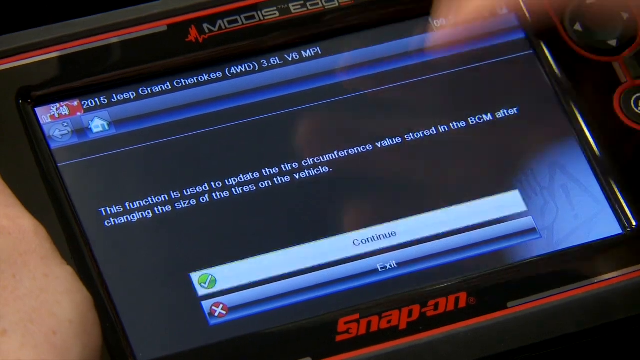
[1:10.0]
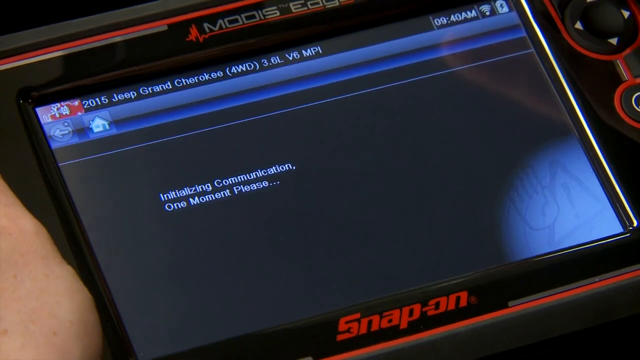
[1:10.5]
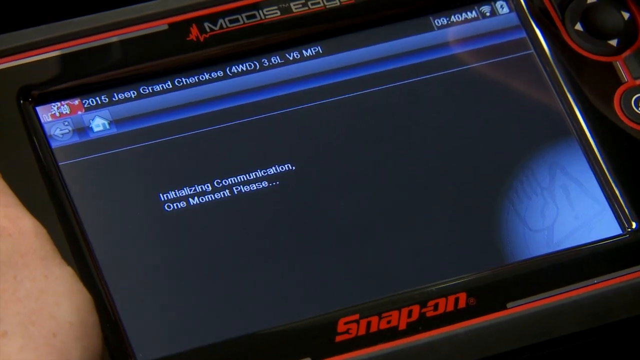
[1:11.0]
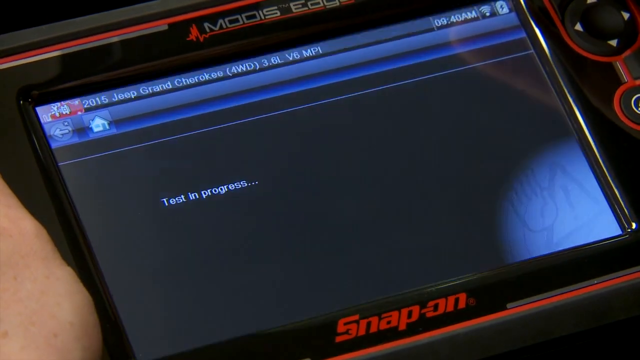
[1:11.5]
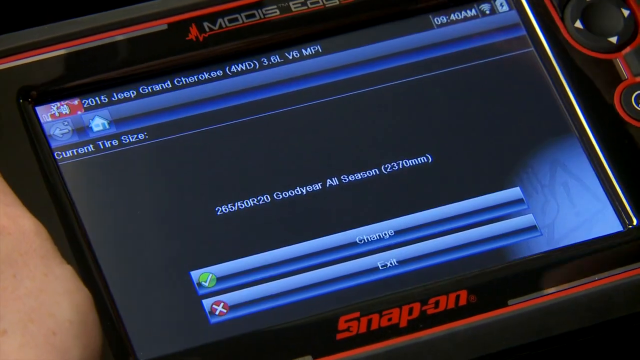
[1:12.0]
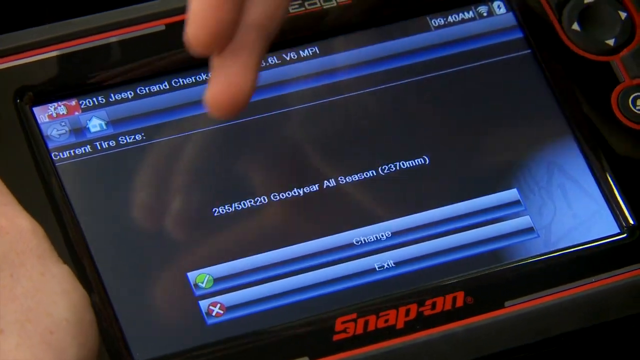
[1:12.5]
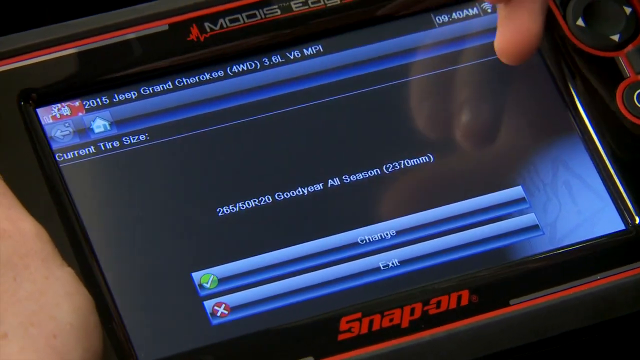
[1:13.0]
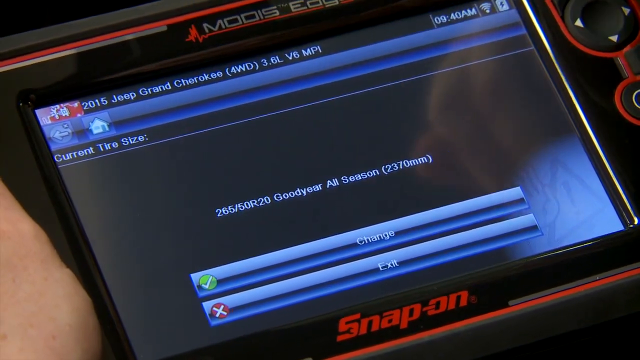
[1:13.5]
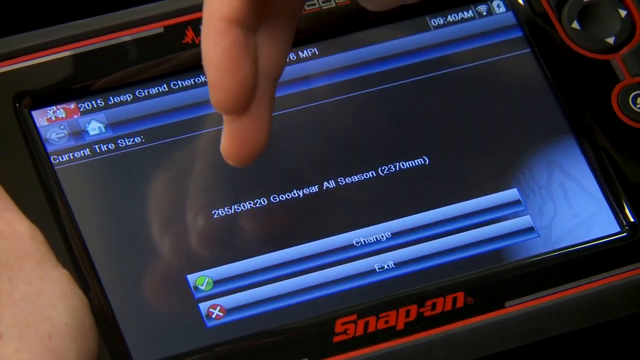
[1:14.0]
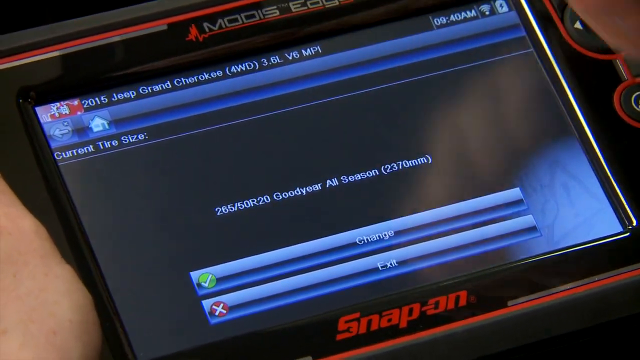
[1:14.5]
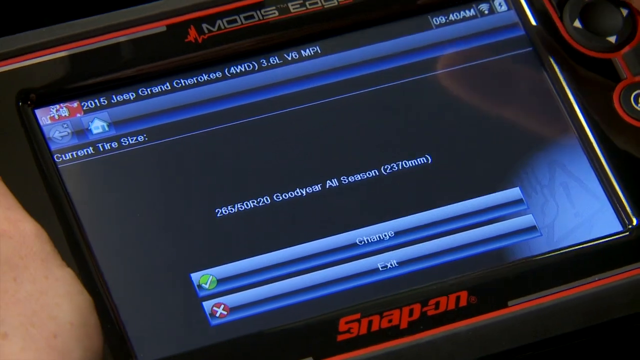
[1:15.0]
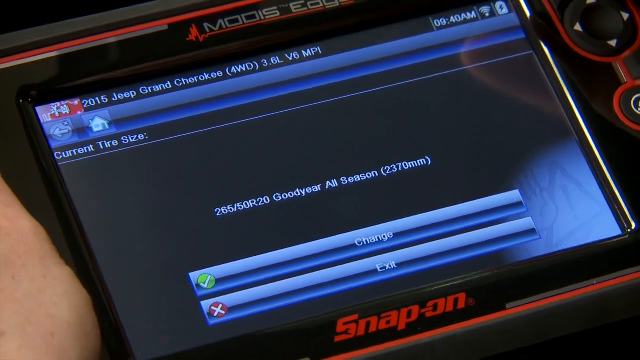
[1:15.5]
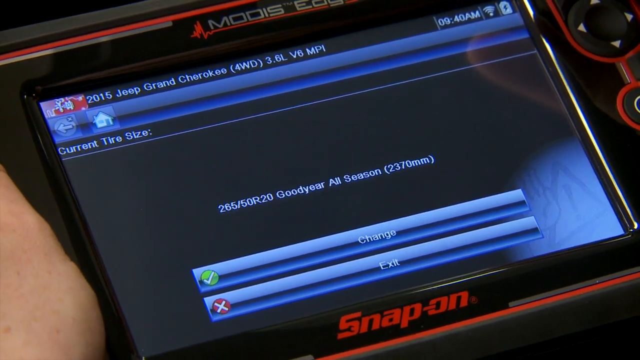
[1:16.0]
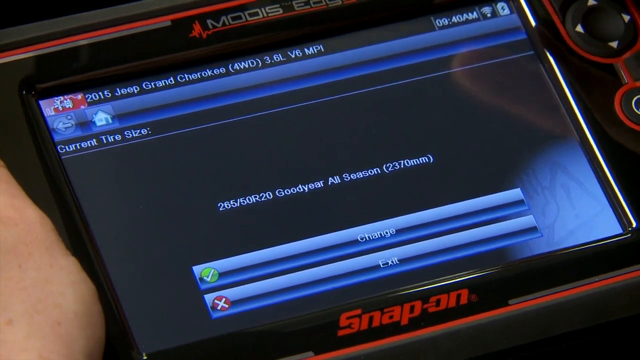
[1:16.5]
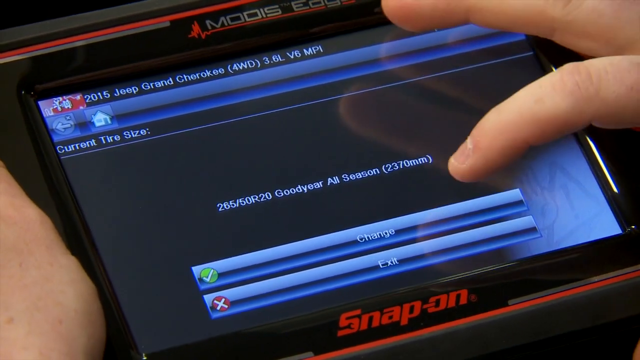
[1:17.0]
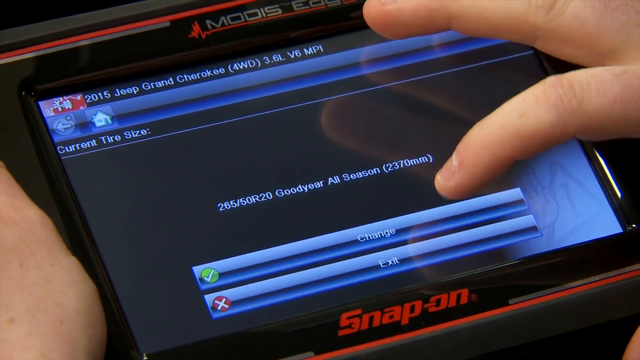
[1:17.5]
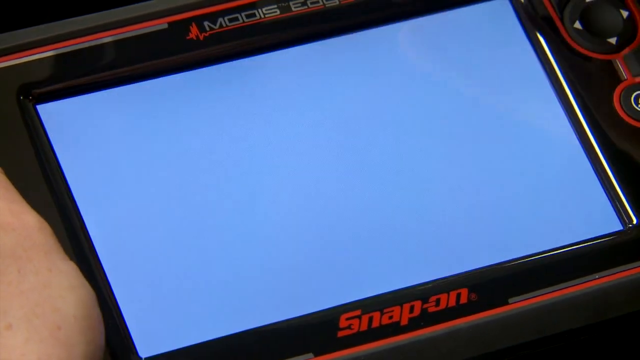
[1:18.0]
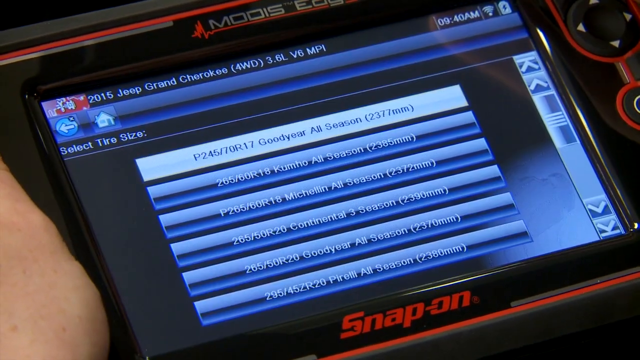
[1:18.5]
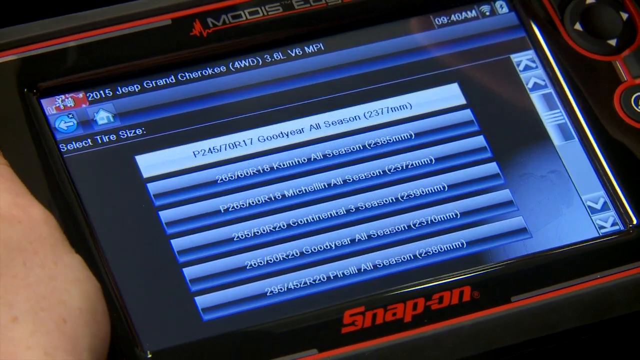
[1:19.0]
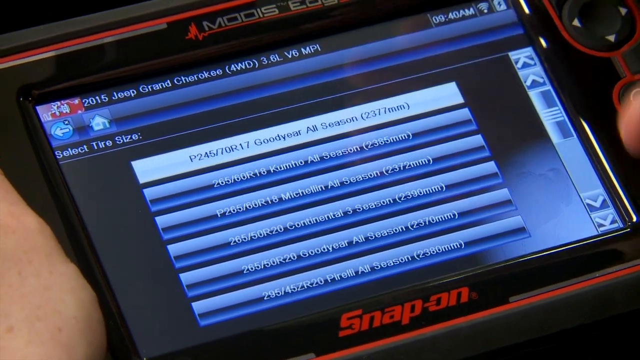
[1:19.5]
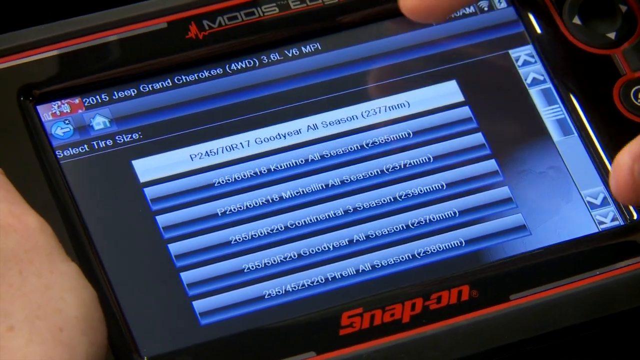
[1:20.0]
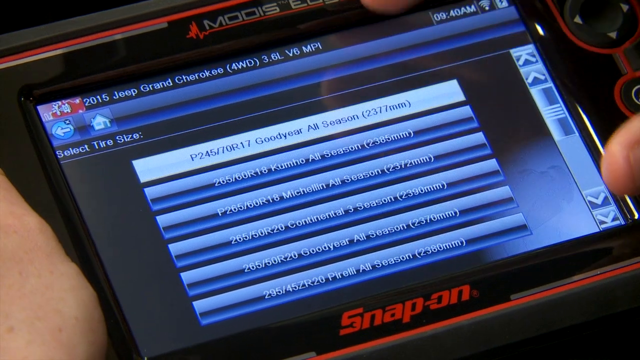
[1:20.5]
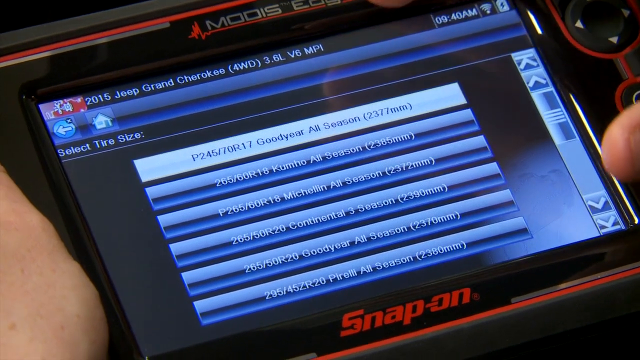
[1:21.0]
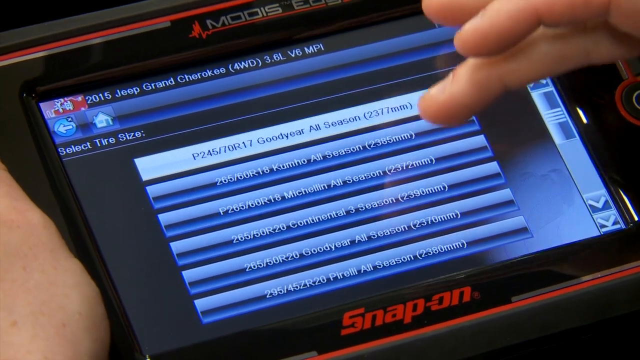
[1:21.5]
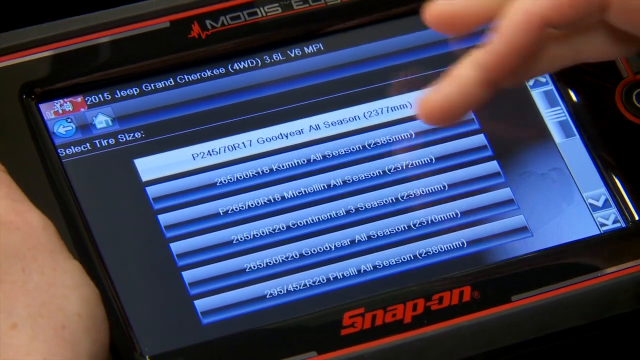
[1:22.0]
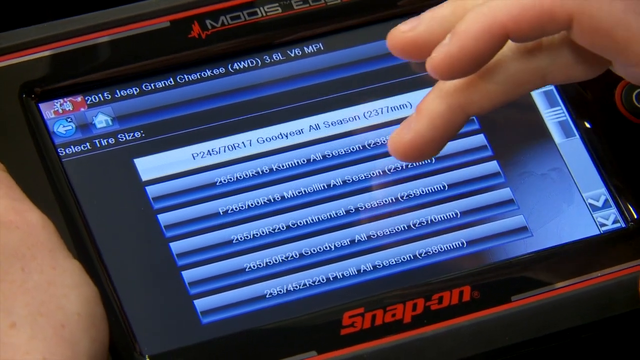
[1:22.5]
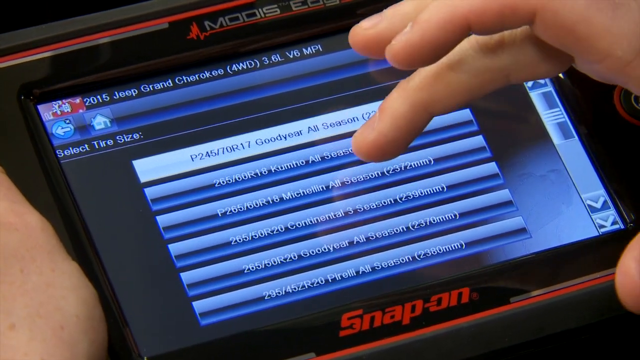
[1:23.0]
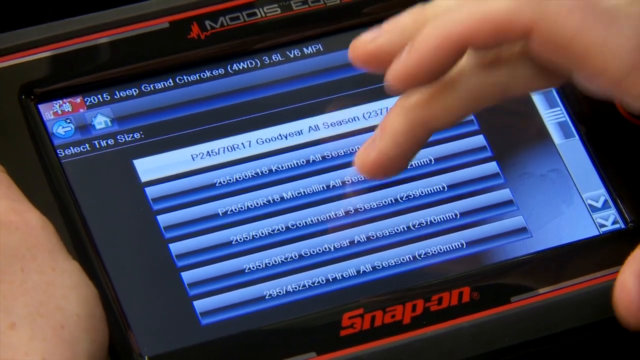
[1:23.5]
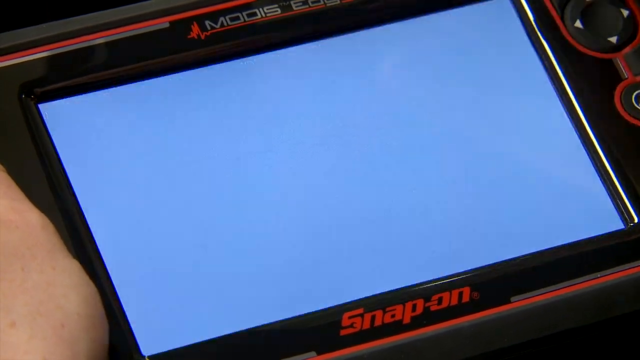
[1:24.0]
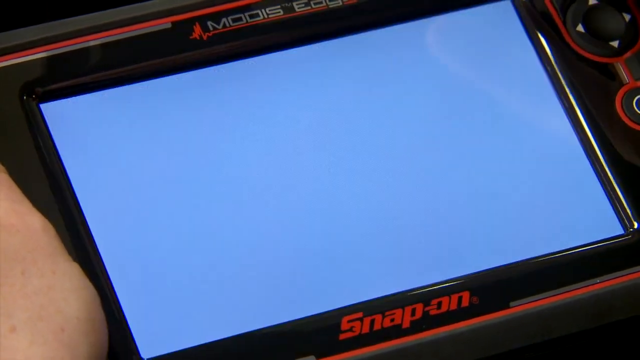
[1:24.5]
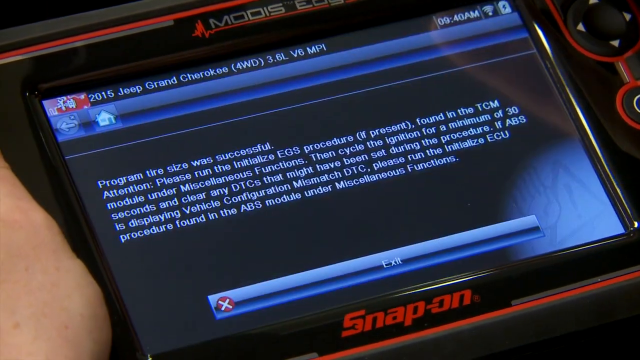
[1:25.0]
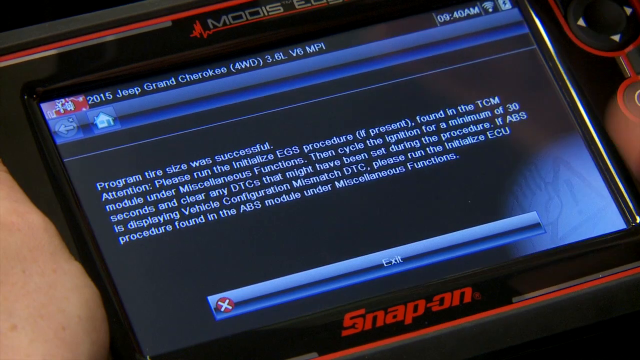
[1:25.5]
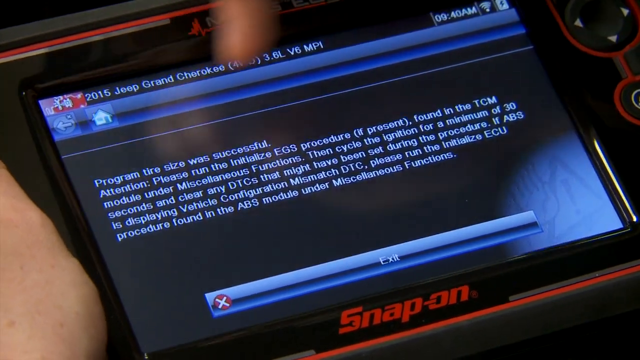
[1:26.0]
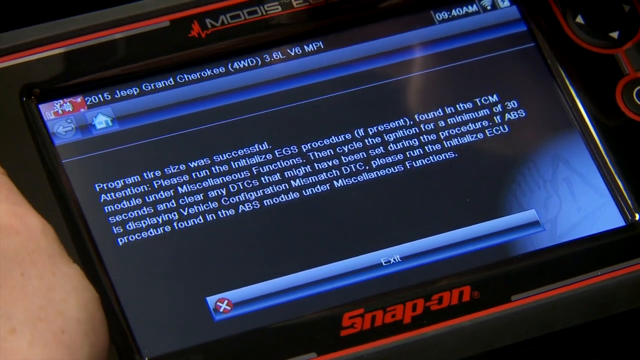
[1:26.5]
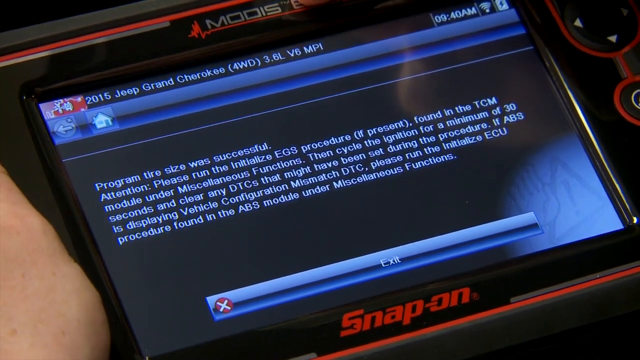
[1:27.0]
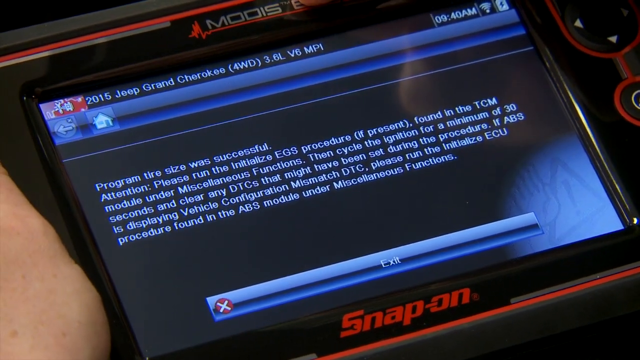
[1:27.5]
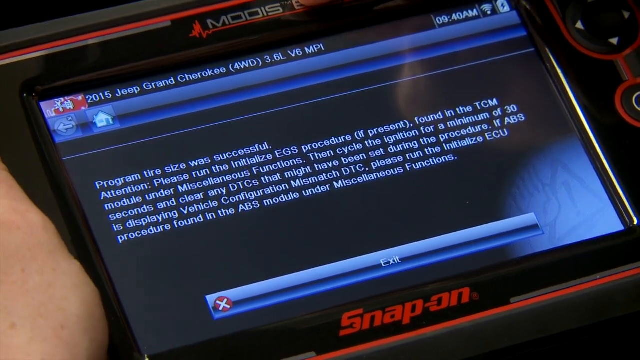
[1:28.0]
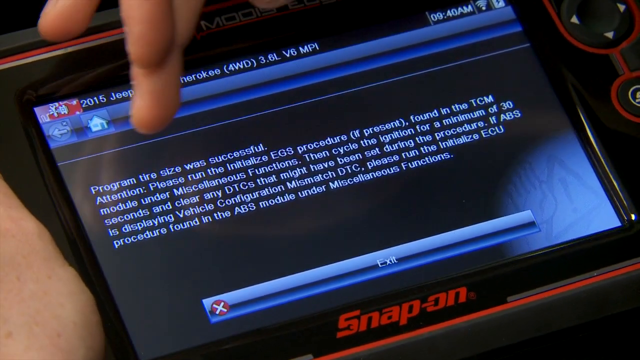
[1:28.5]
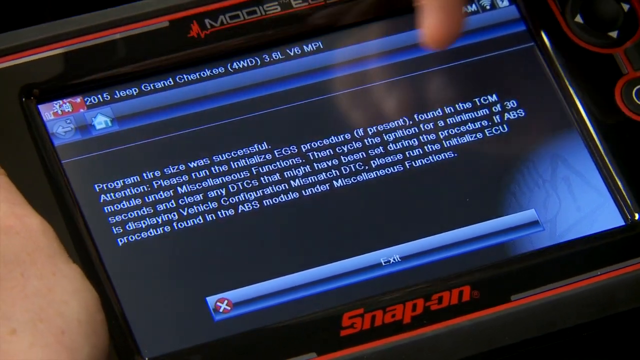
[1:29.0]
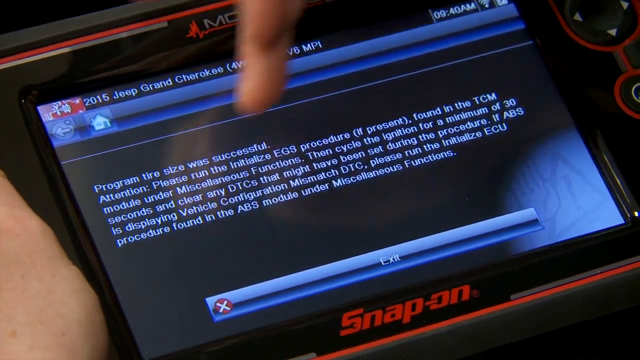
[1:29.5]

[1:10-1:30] He looks through more menus on the device and taps continue again, then selects a tire size of 2372 millimeters. A message reads "program tire size was successful", followed by a long attention message. The shot stays on the device's screen in his hands for around 40 to 50 seconds without the framing changing.